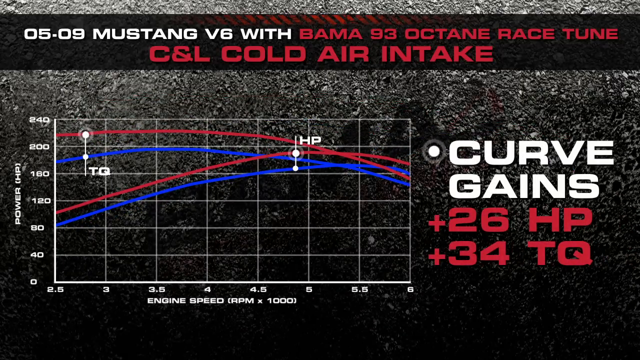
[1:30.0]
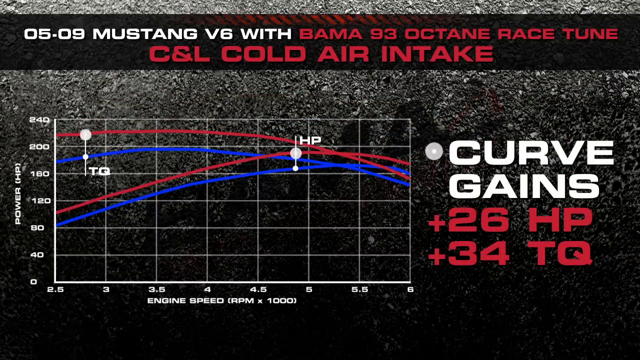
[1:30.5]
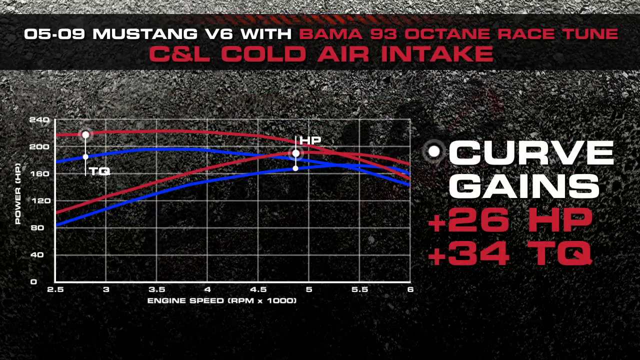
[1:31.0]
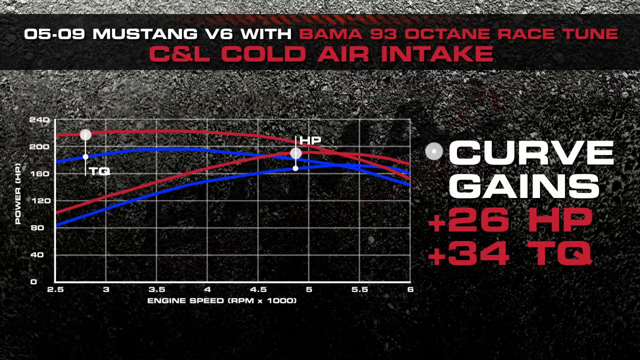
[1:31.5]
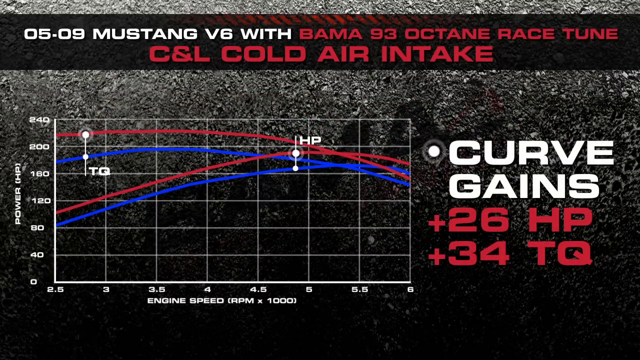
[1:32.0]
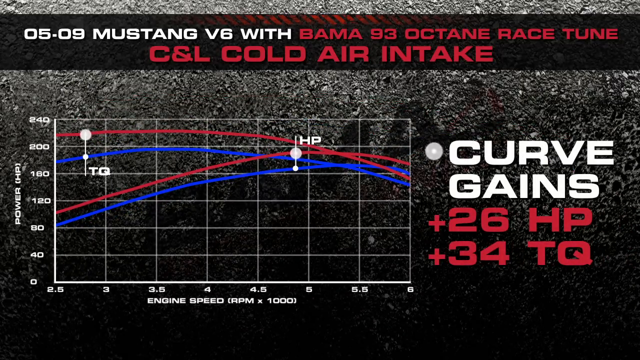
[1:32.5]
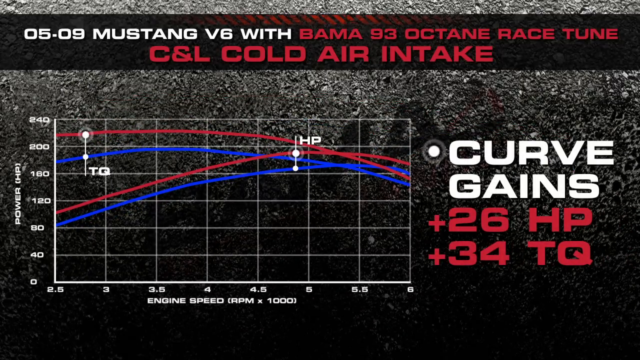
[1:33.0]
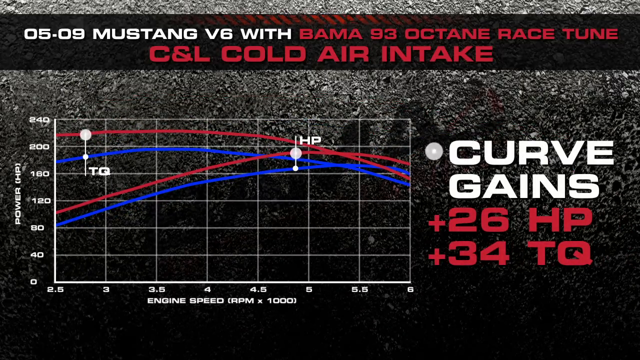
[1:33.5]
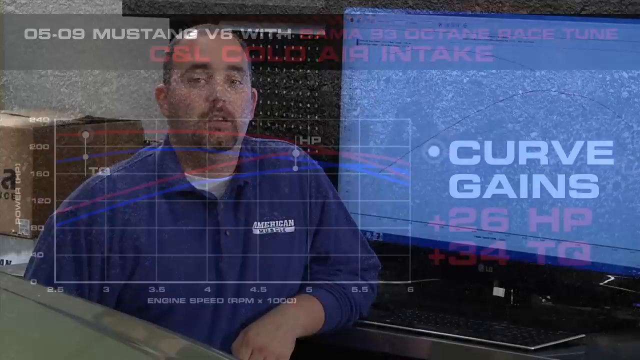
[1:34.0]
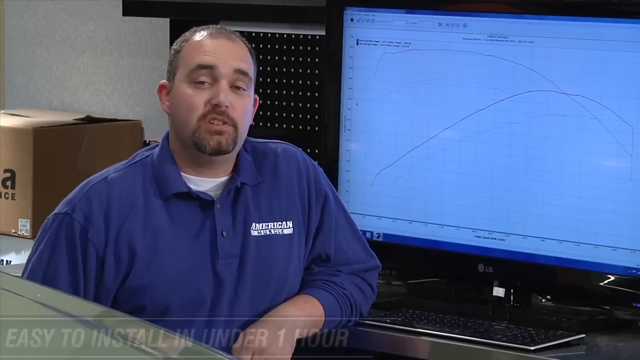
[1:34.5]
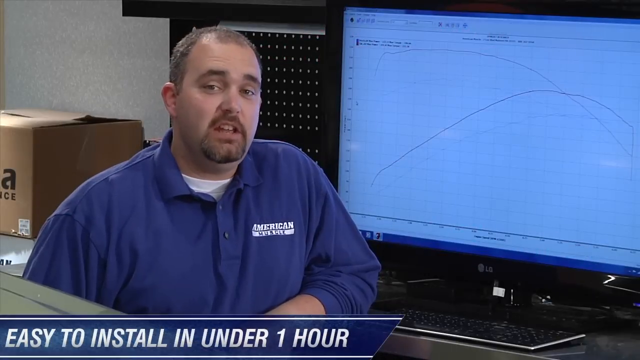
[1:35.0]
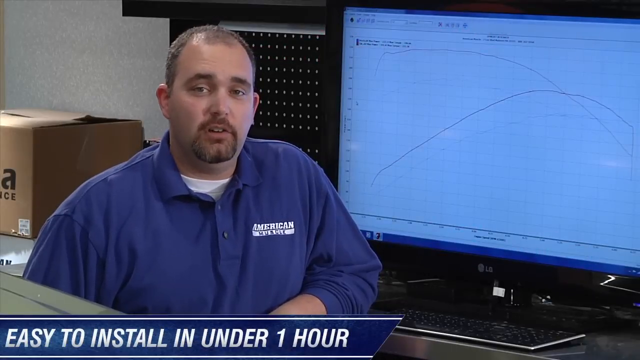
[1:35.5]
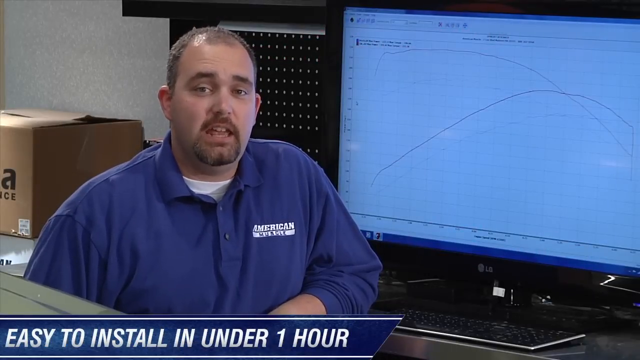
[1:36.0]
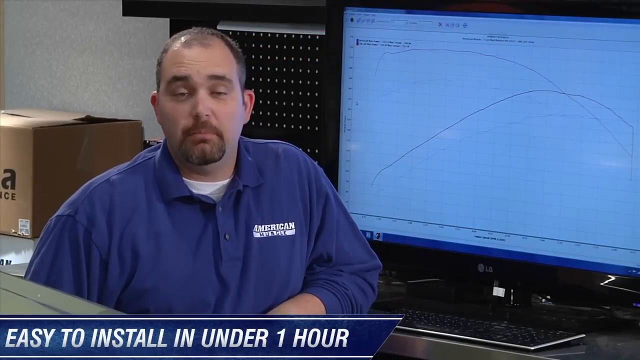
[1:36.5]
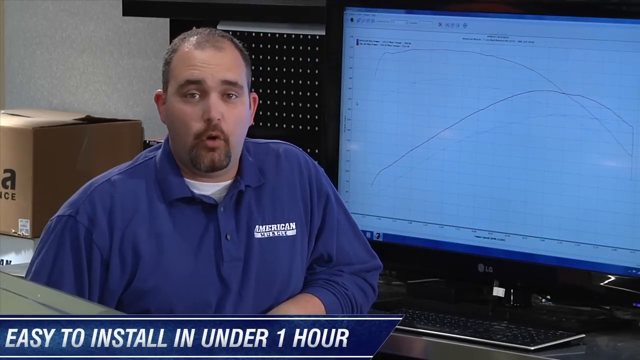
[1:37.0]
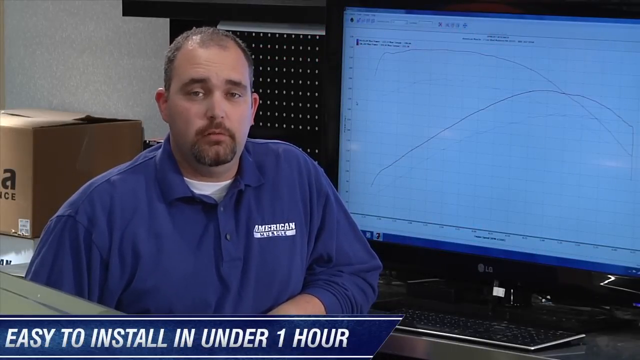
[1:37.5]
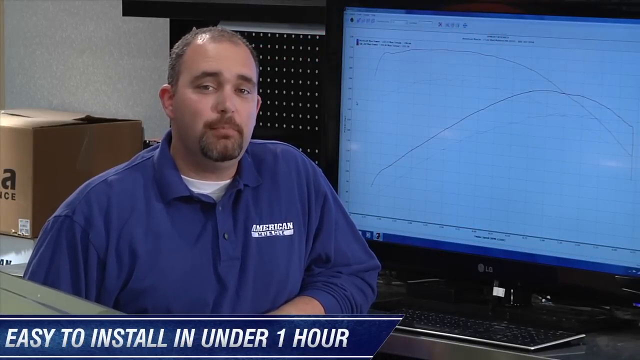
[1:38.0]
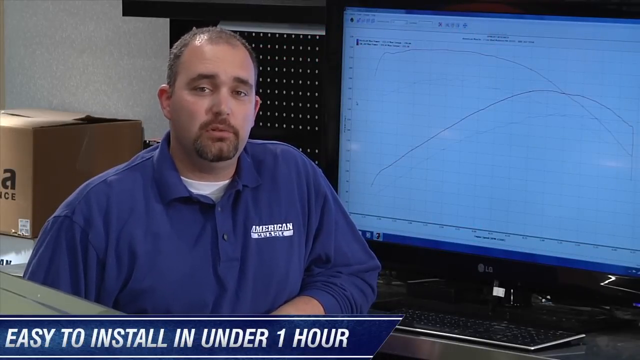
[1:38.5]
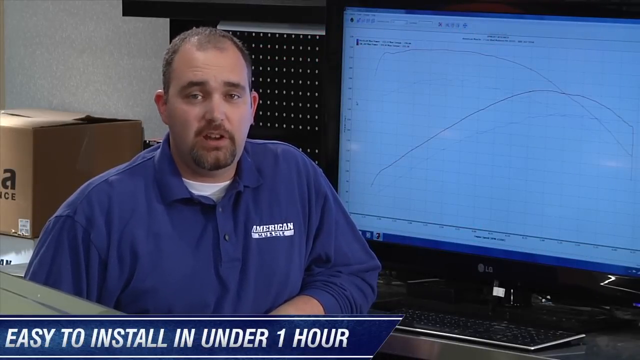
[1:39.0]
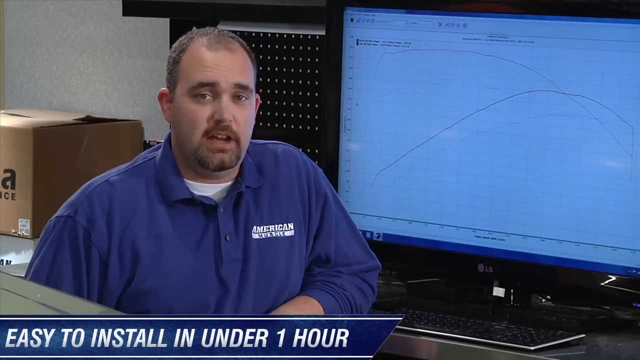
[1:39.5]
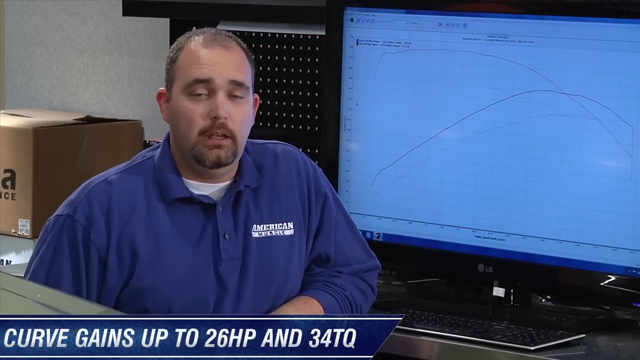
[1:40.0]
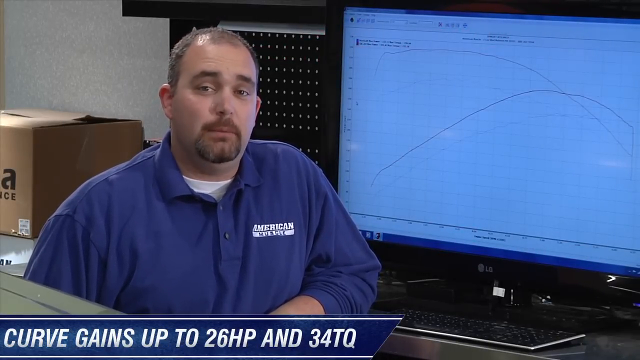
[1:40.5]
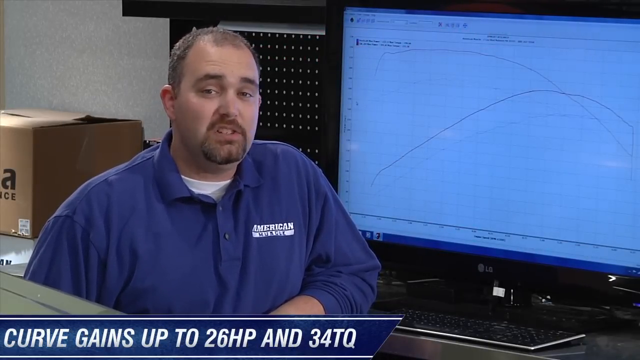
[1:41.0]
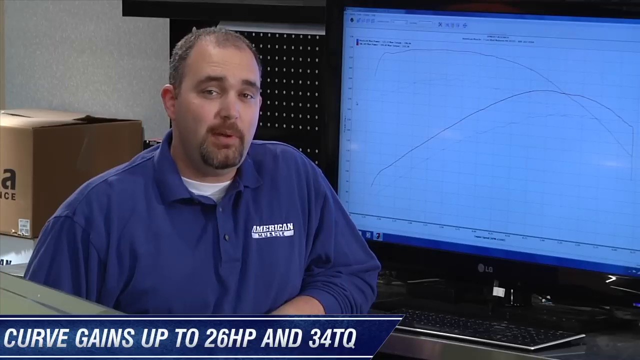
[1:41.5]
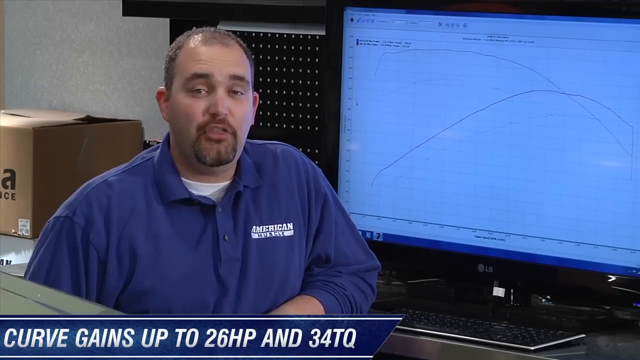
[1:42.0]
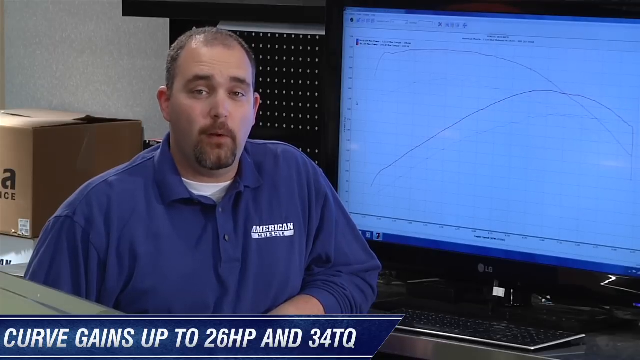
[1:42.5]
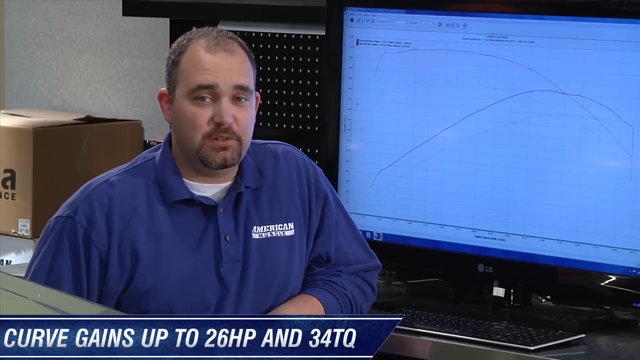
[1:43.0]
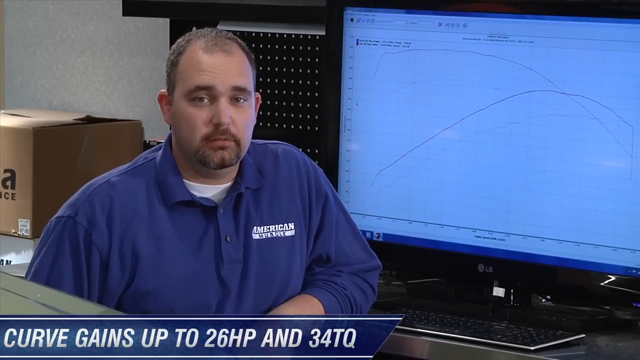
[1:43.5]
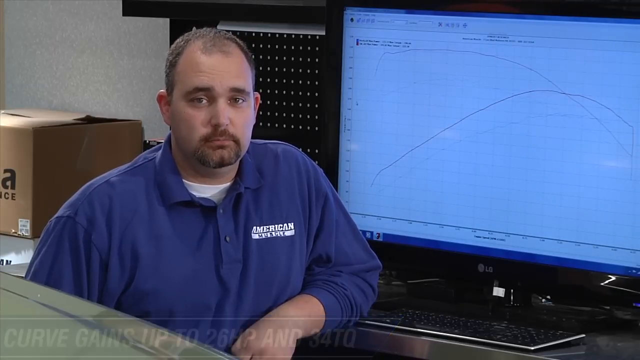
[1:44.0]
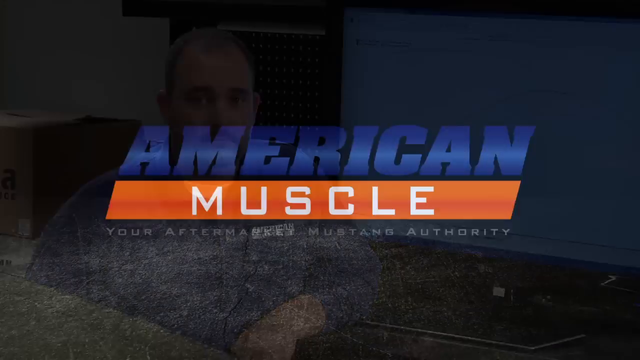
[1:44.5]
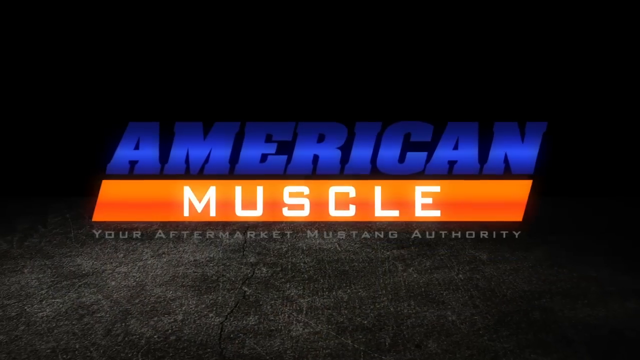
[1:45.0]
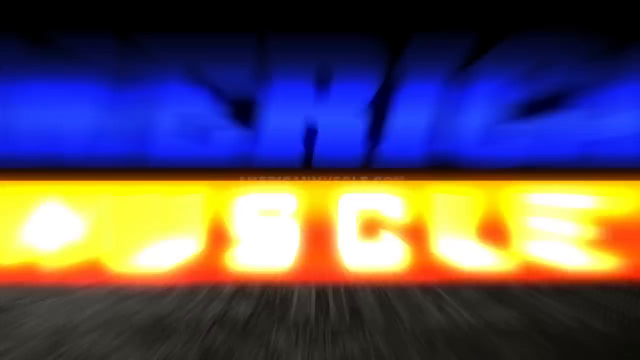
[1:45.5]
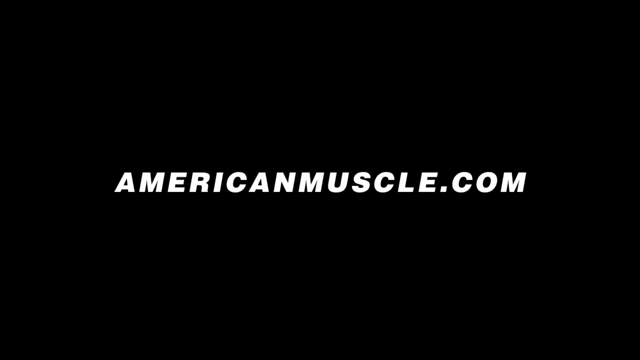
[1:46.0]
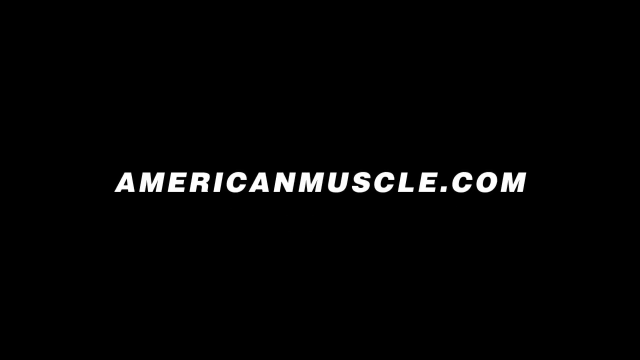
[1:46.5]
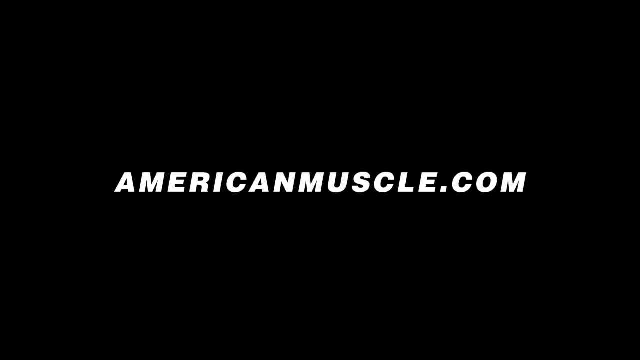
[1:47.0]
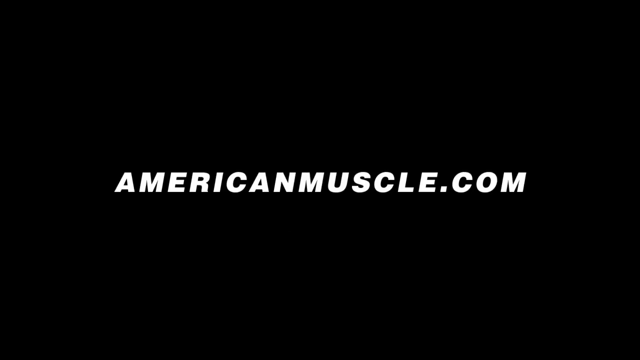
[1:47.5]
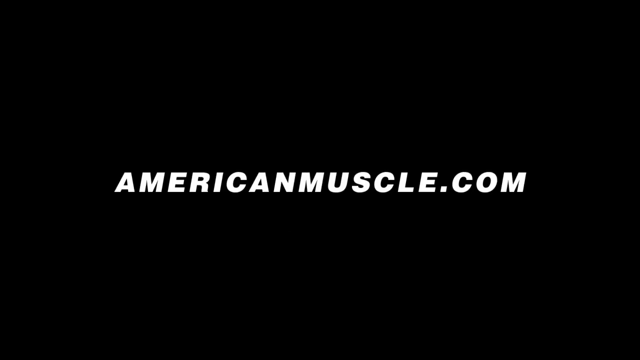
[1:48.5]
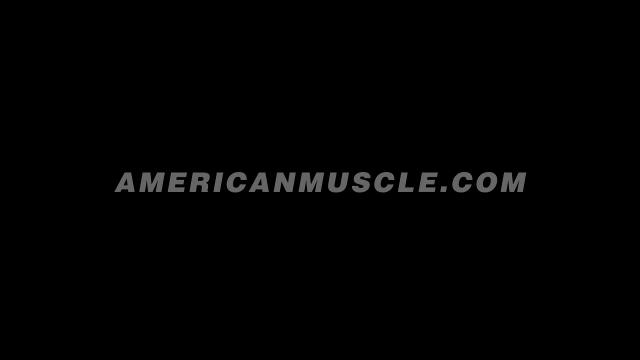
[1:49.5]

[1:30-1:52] The graph-like screen is shown. The graph is white and in a checkerboard format, with power (HP) on the left and engine speed (RPM x 1,000) along the bottom. Blue and red lines are drawn on the graph in a sort of curved shape. On the far right are the words "curve gains" in white, and below them are two red plus symbols: the top one says "26 HP" and the second says "34 TQ." A little white circle blinks to the left of "curve gains," and on the graph an HP circle blinks near around the 170 mark while a TQ circle blinks around the 220 mark. The video switches to a man sitting in a chair, with a white skin tone, a short goatee and black hair, wearing a blue shirt with a name on the top left chest that apparently says "American." There is a large monitor to his left (the viewer's right) with a large, sort of checkered-style graph on it. The scene changes to a pop-up showing "American muscle," followed by another pop-up that says "AmericanMuscle.com."